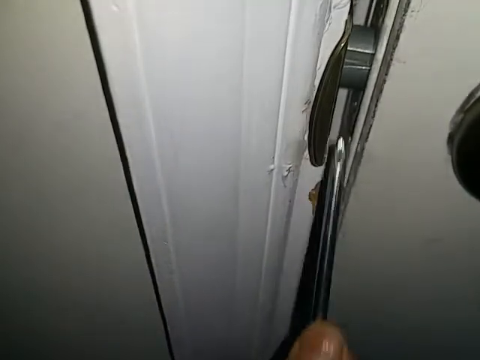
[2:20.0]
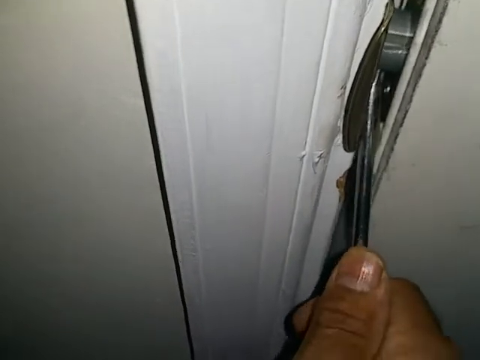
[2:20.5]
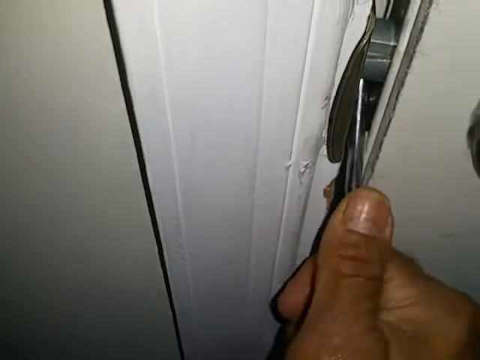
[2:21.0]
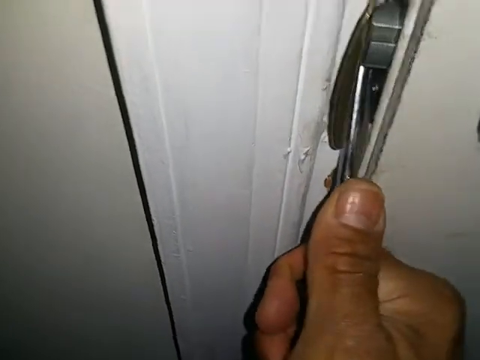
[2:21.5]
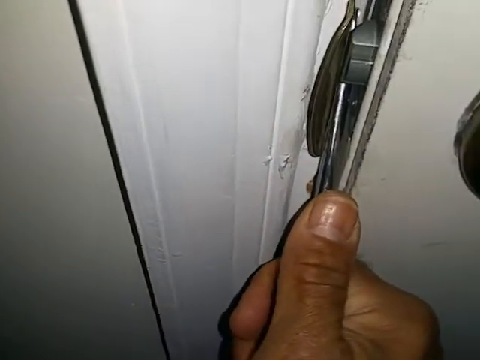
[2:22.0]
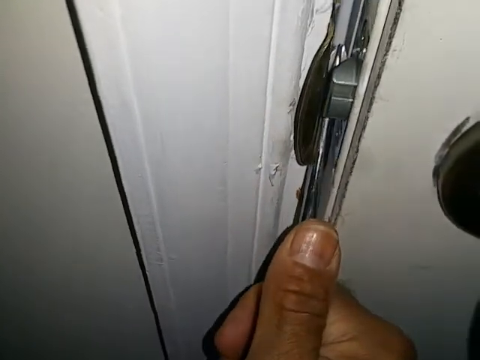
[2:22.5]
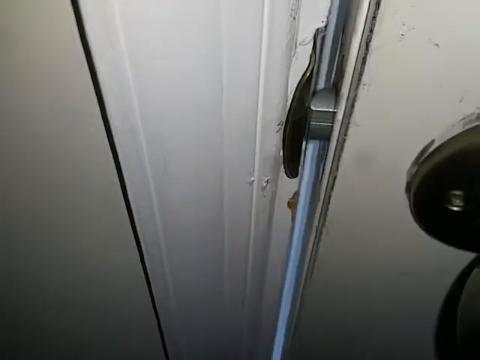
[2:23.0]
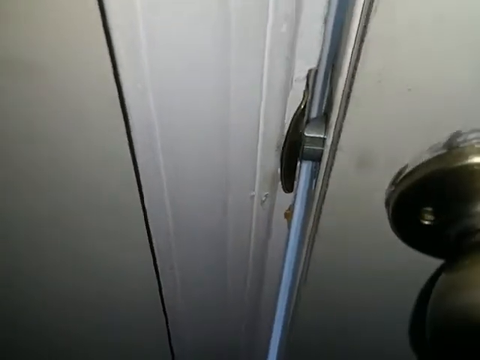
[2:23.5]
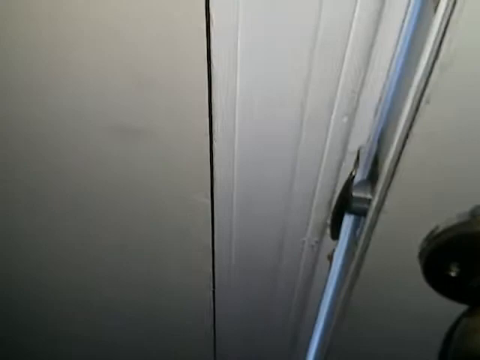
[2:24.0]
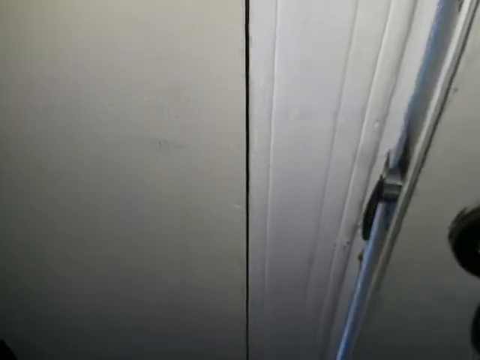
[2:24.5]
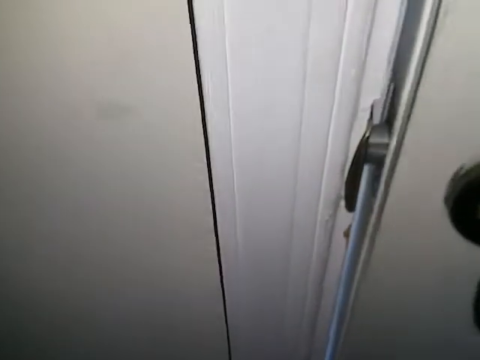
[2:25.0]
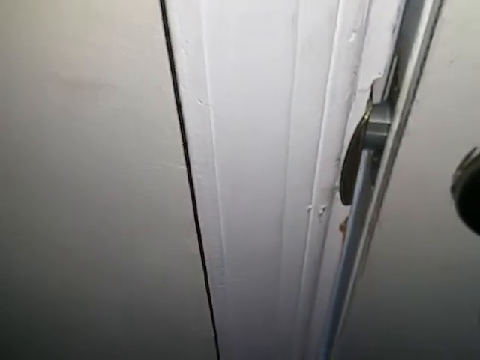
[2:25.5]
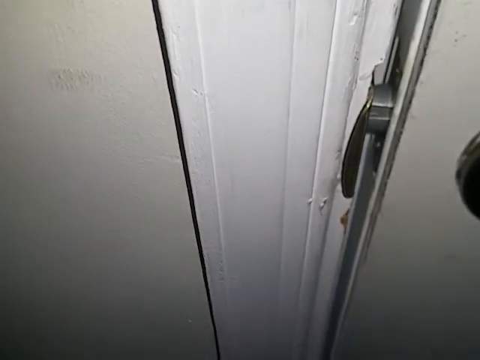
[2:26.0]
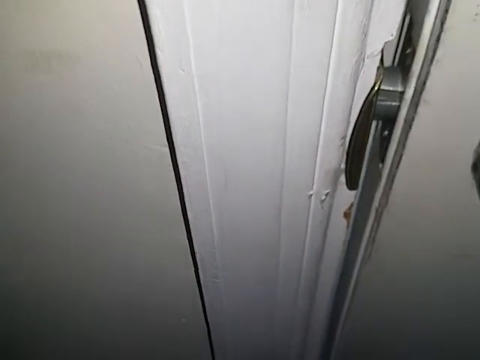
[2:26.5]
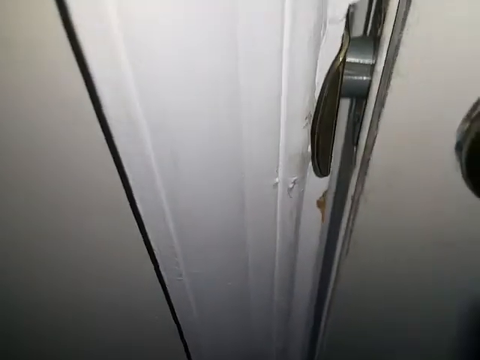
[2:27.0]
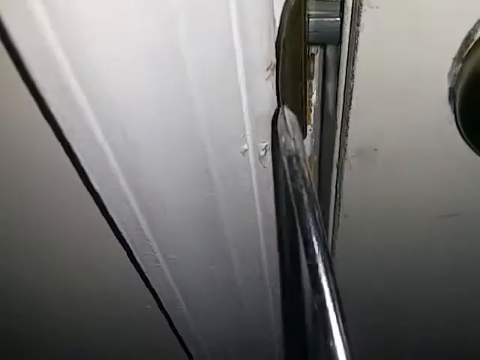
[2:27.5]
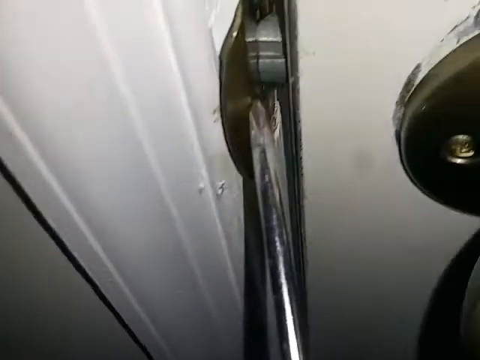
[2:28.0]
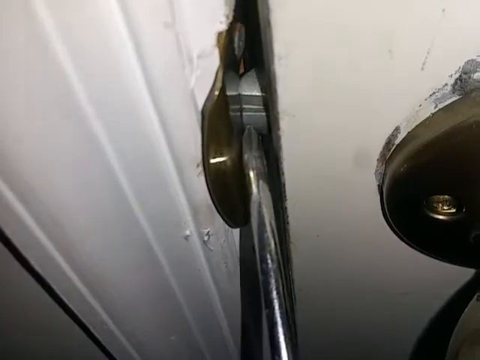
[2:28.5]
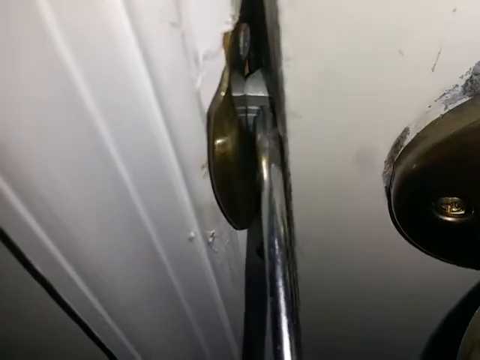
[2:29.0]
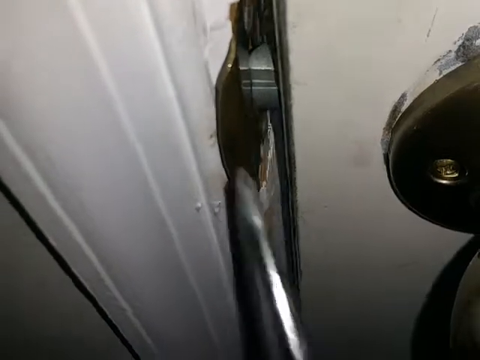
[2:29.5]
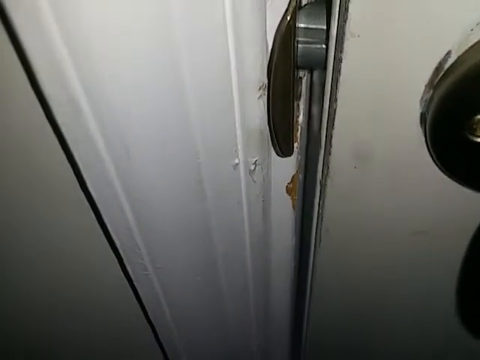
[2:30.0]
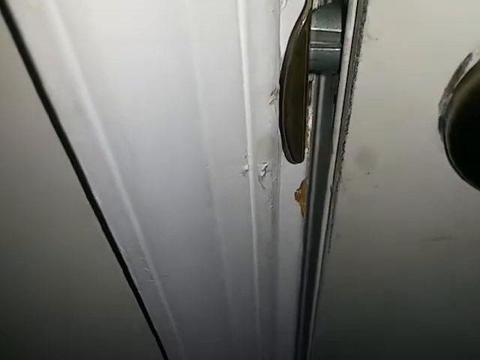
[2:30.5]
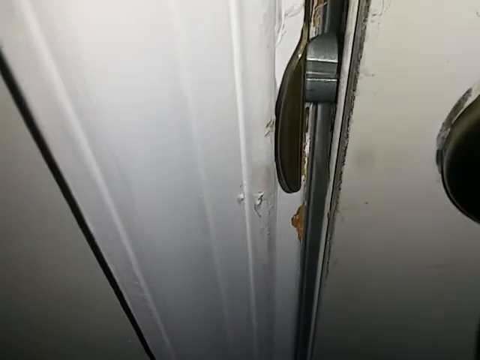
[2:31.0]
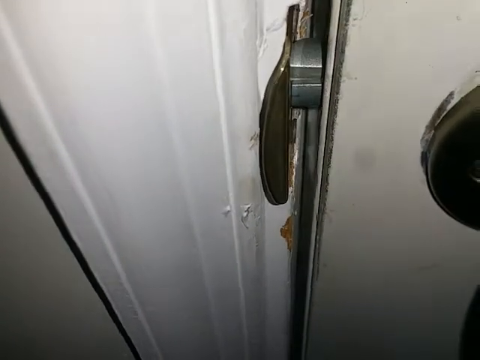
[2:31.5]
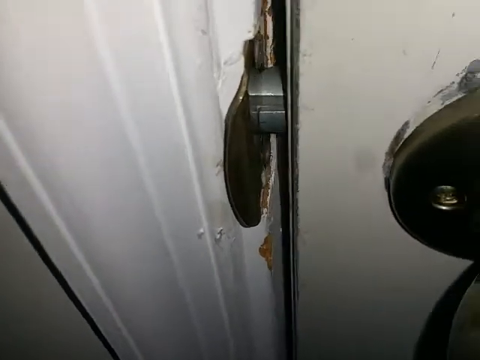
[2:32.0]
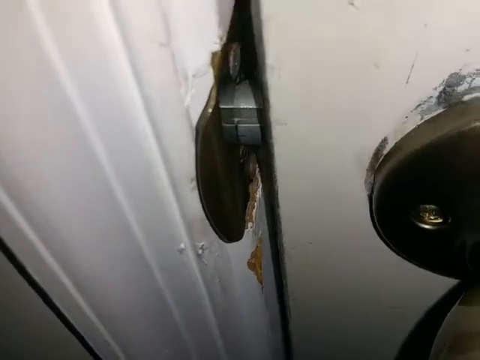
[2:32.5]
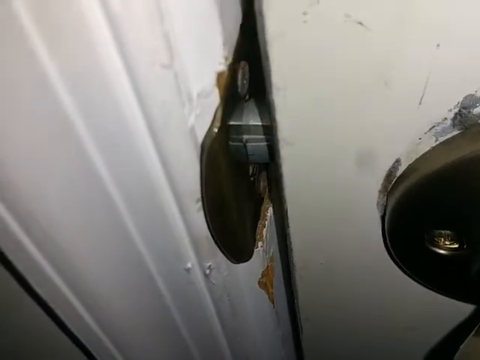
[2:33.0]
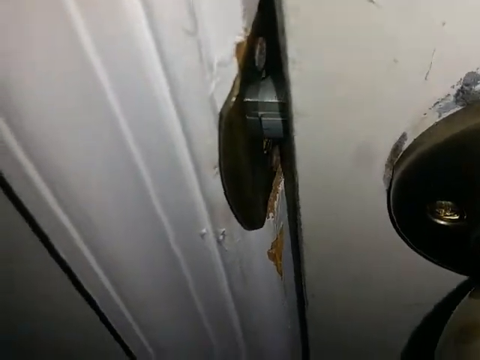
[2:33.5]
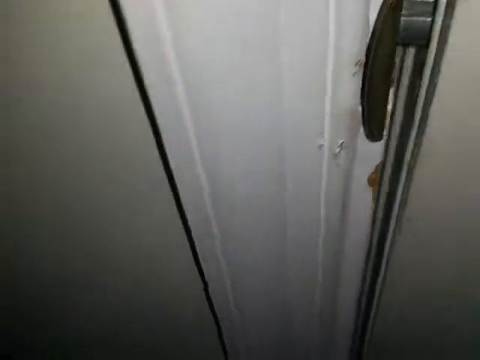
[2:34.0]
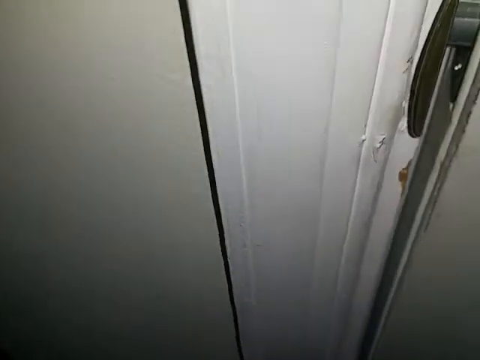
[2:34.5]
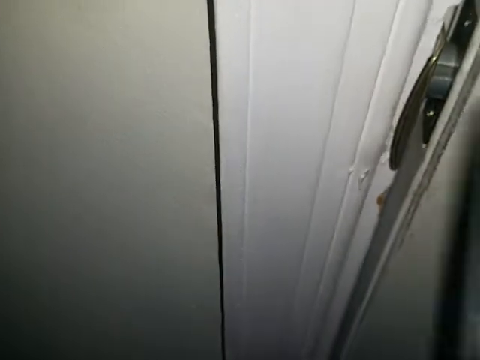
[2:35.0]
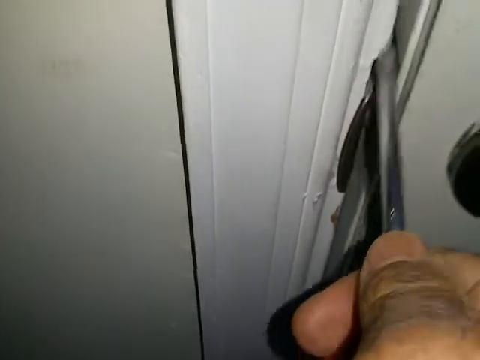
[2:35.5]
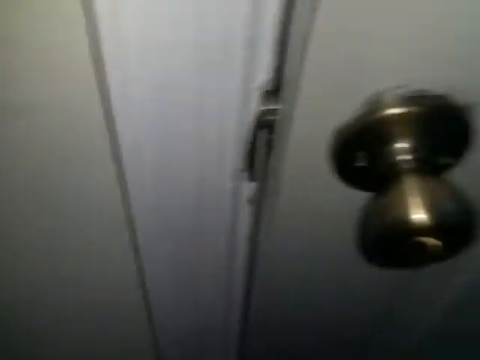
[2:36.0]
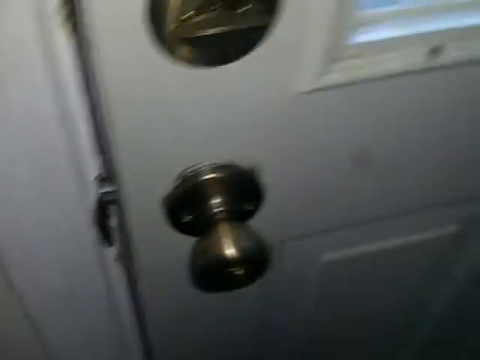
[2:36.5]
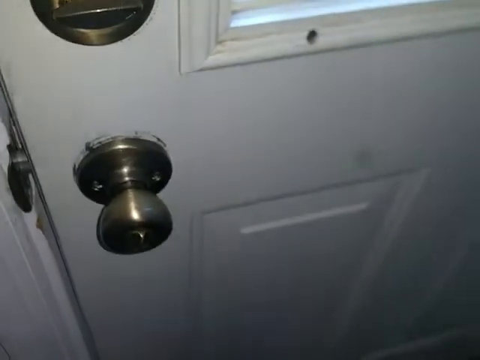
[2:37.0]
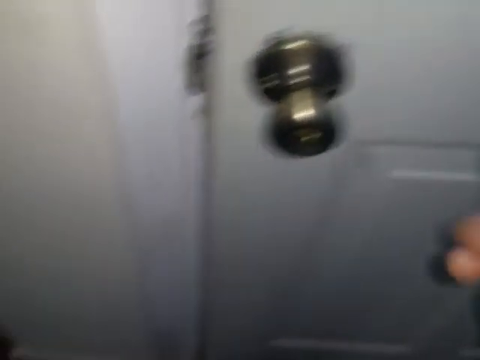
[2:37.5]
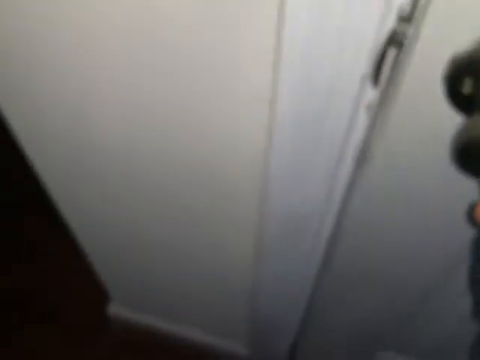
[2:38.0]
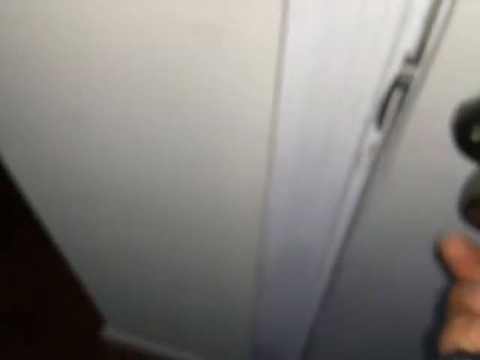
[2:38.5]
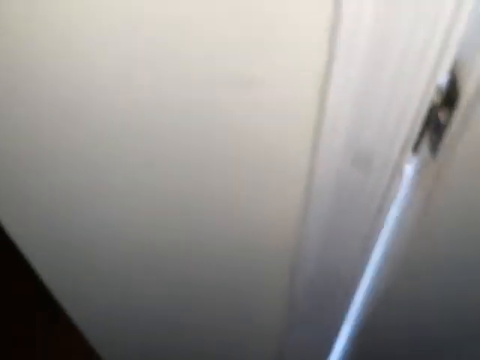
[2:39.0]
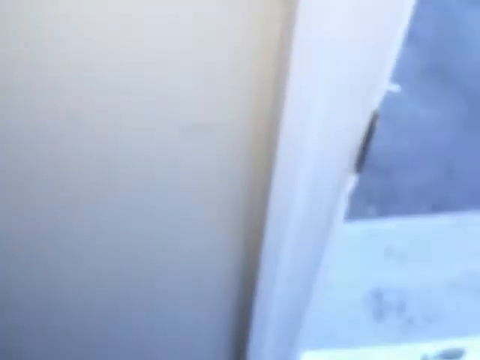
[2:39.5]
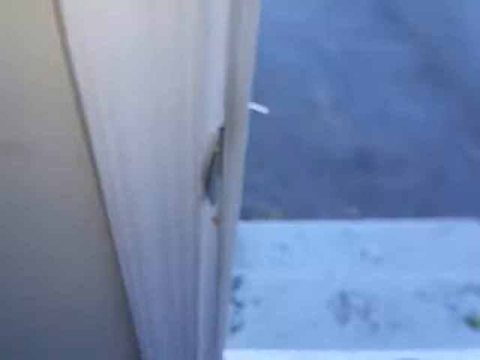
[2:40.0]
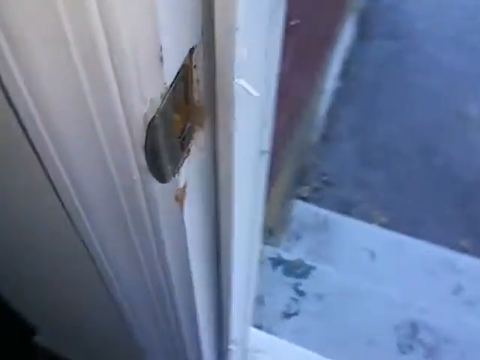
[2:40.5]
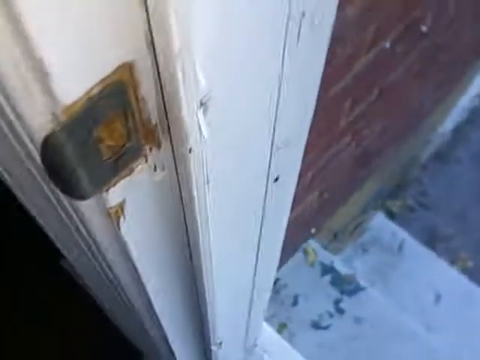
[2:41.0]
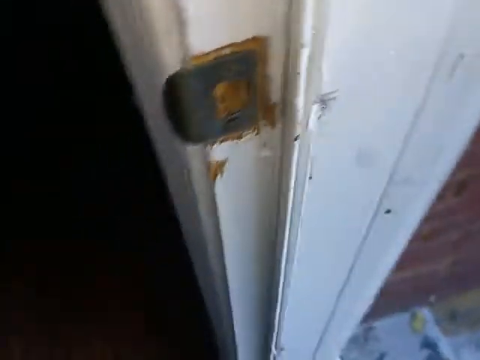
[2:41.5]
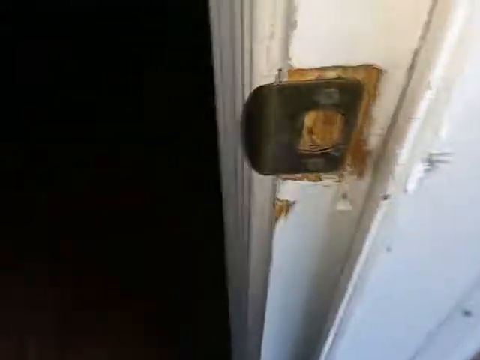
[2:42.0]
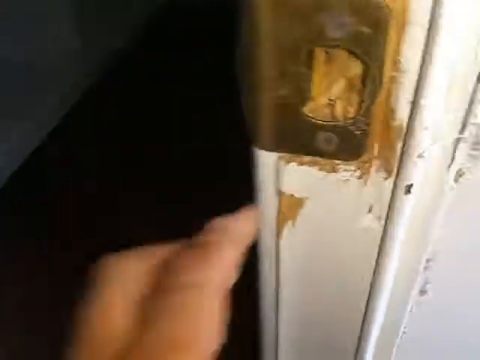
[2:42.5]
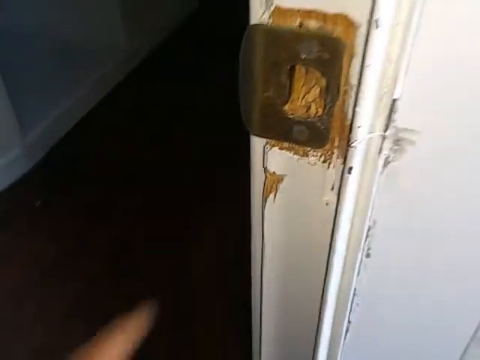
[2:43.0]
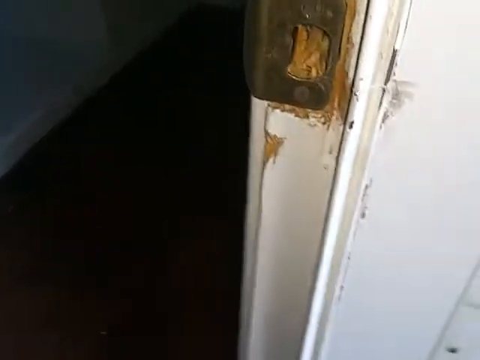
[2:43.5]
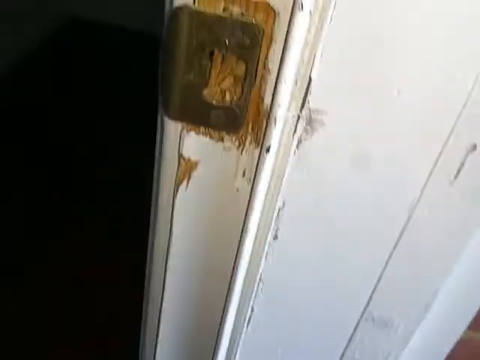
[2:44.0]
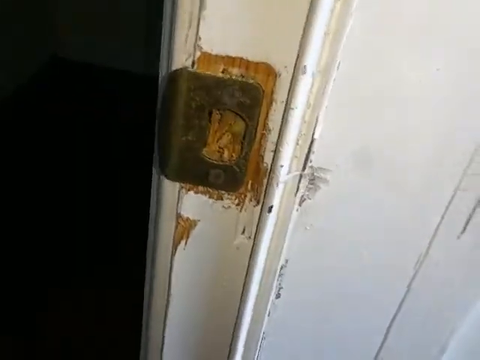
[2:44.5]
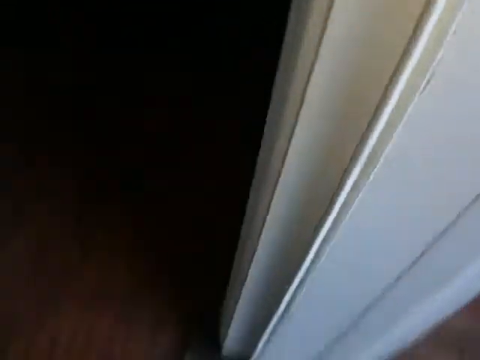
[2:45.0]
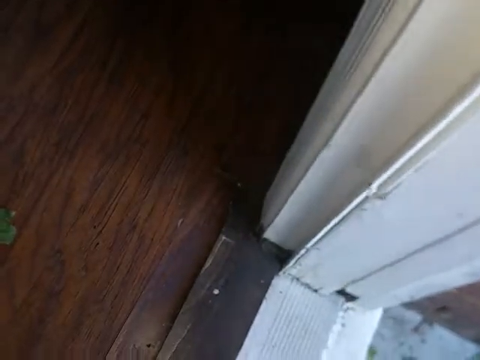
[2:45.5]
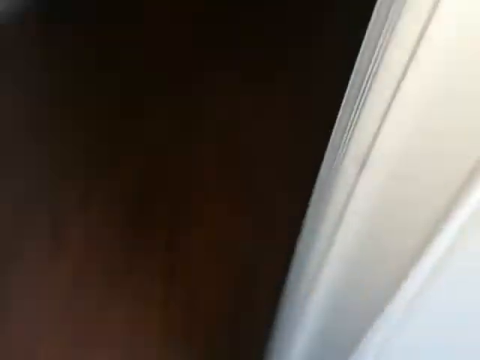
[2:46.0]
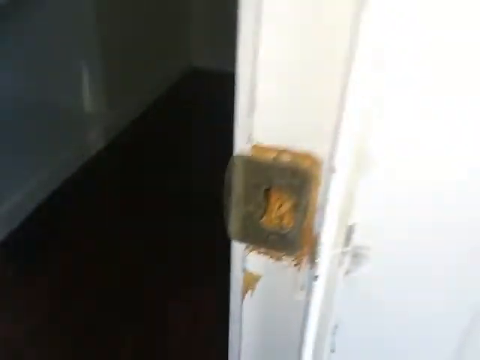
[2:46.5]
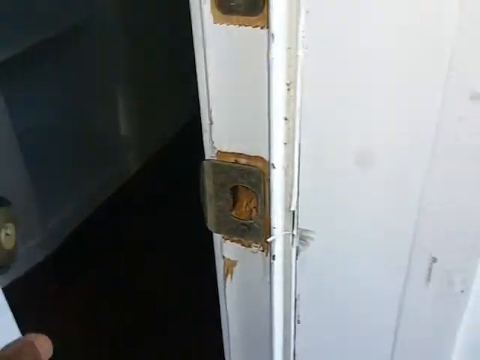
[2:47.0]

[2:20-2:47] The right hand, with the right thumb visible, holds the black Phillips head screwdriver, which is inserted under the door latch and levered so the latch opens without the knob moving. The man shuts the door to confirm it is securely in place, then pokes at the strike plate with the screwdriver. He uses his right hand to pull the door open without twisting the doorknob, then steps outside and pans the camera toward the strike plate as he closes the door with his left hand. The video ends abruptly without showing any repair steps; it appears to demonstrate opening a locked door with only a screwdriver.